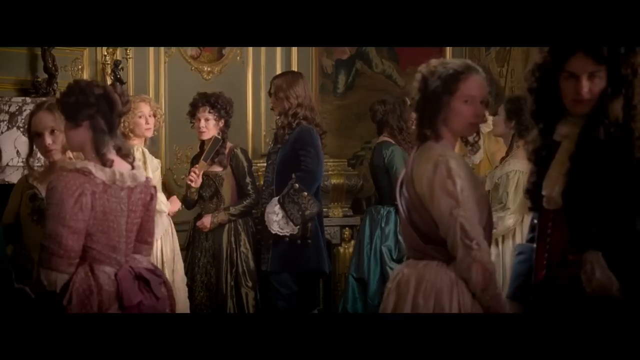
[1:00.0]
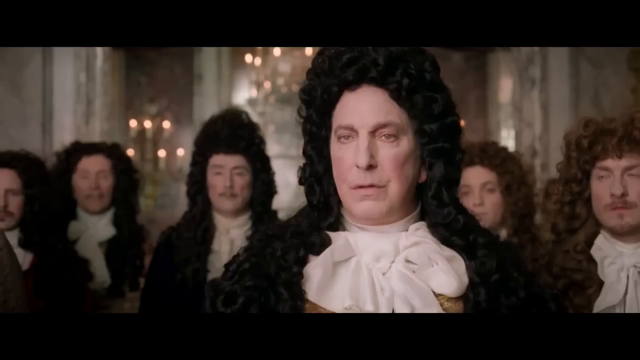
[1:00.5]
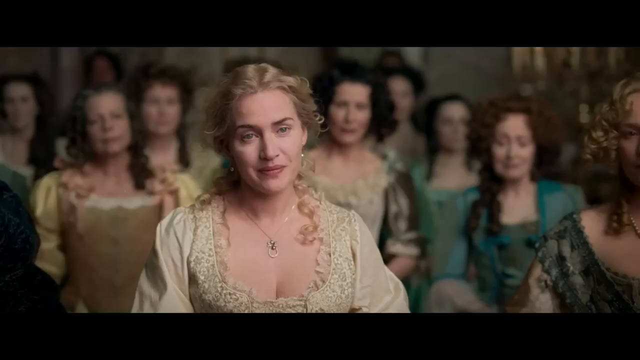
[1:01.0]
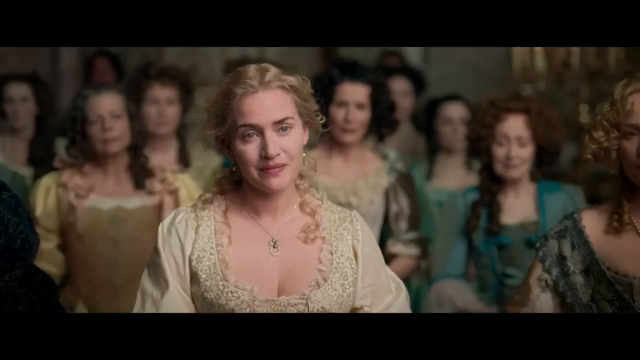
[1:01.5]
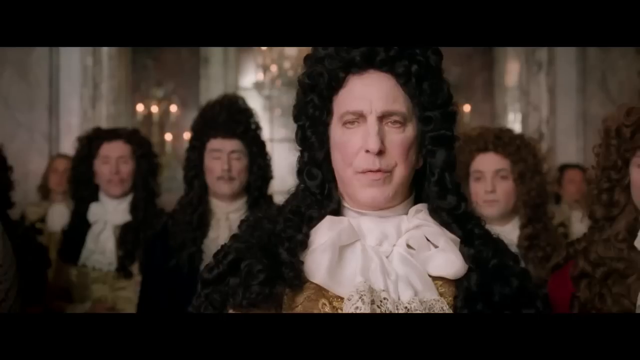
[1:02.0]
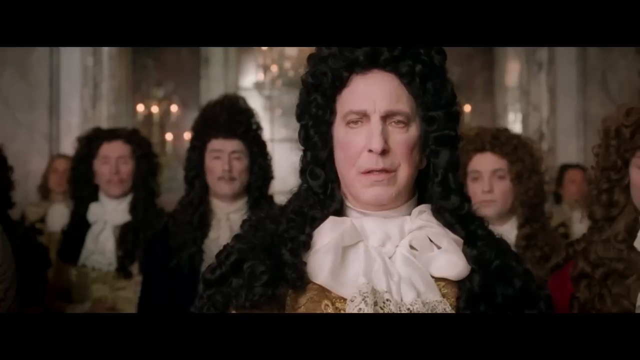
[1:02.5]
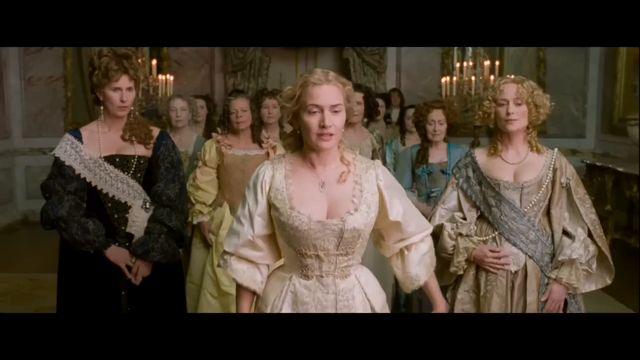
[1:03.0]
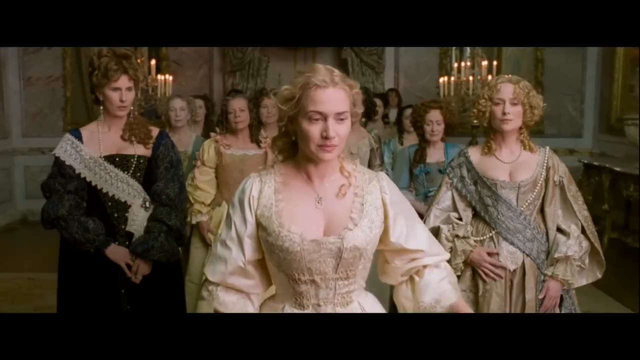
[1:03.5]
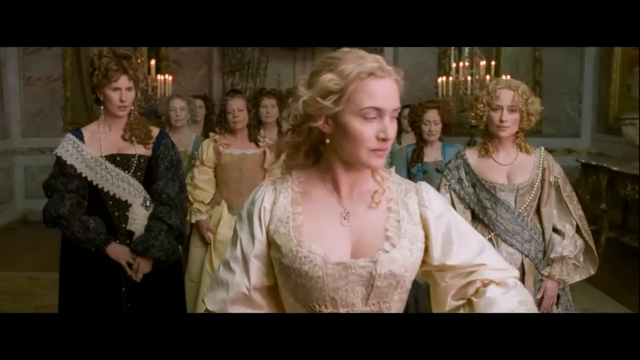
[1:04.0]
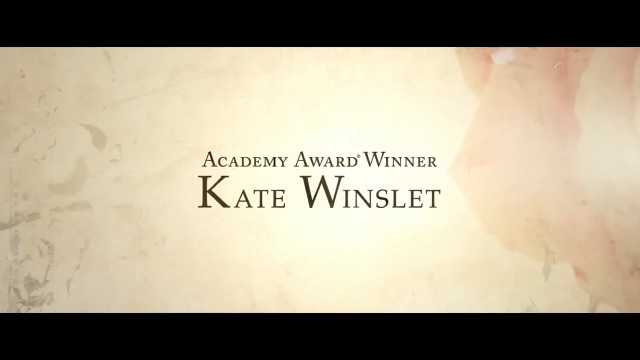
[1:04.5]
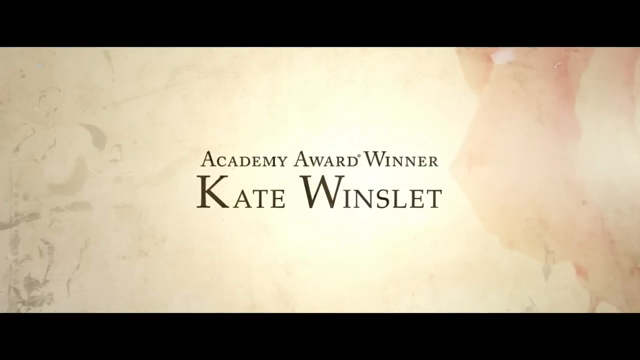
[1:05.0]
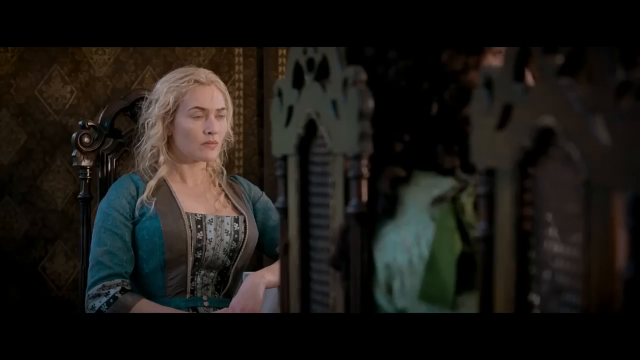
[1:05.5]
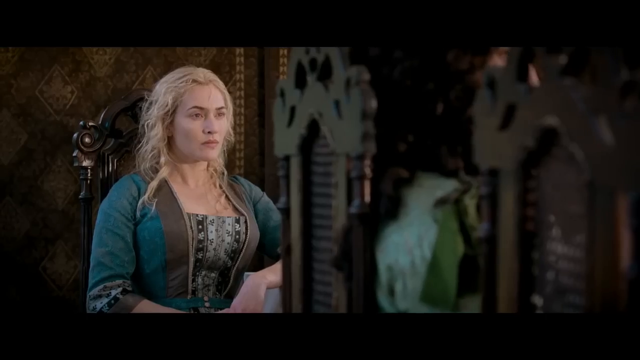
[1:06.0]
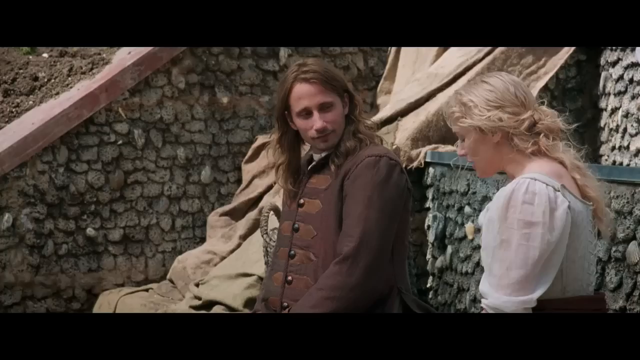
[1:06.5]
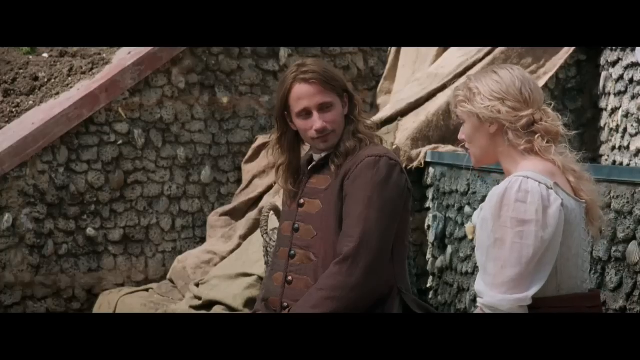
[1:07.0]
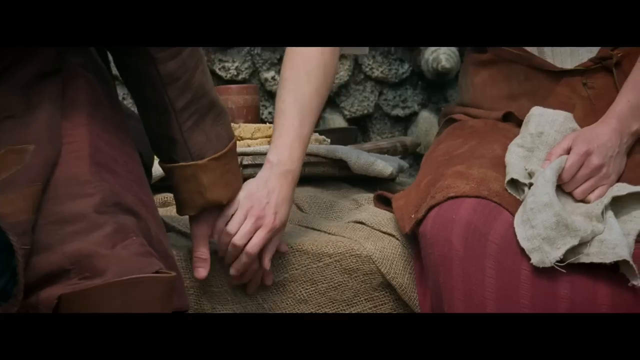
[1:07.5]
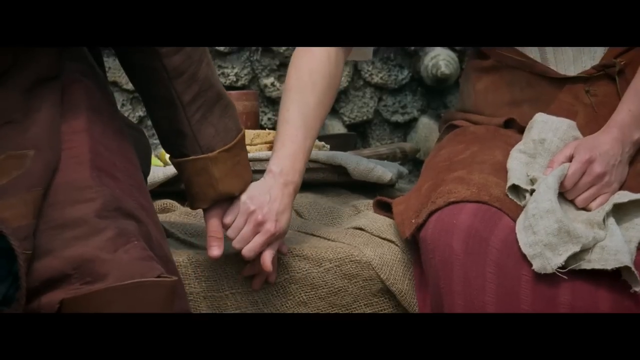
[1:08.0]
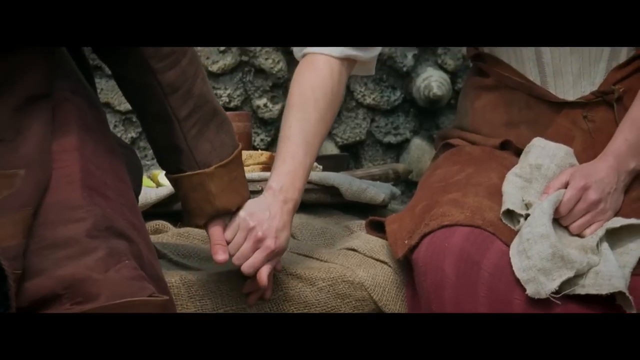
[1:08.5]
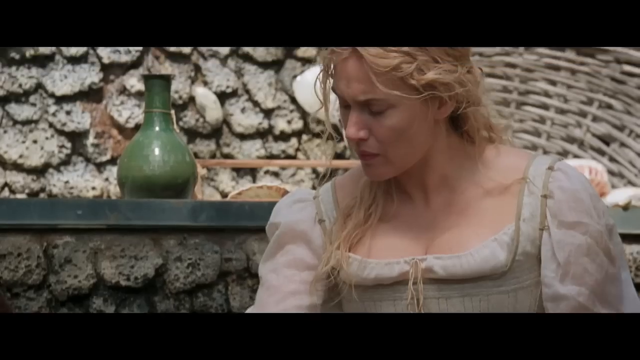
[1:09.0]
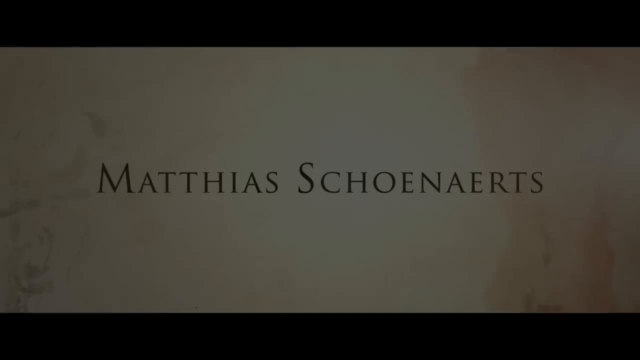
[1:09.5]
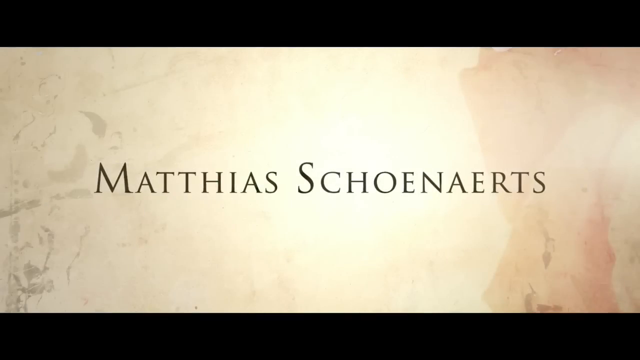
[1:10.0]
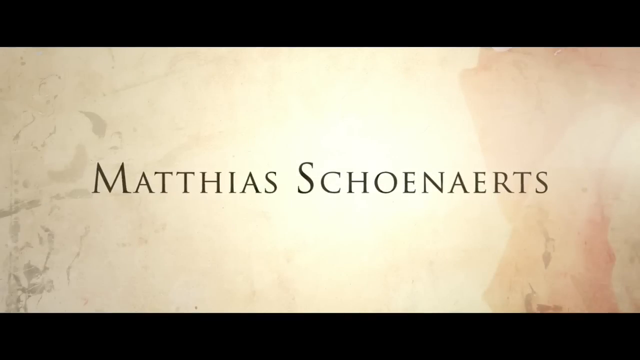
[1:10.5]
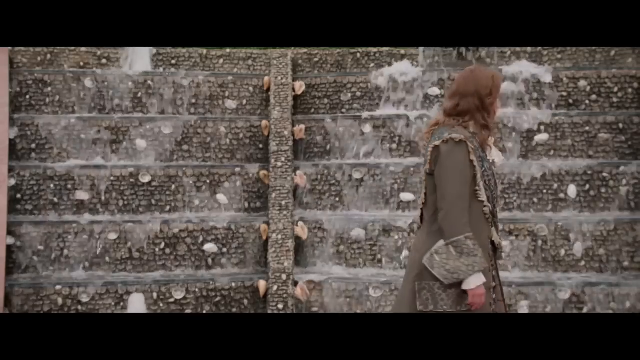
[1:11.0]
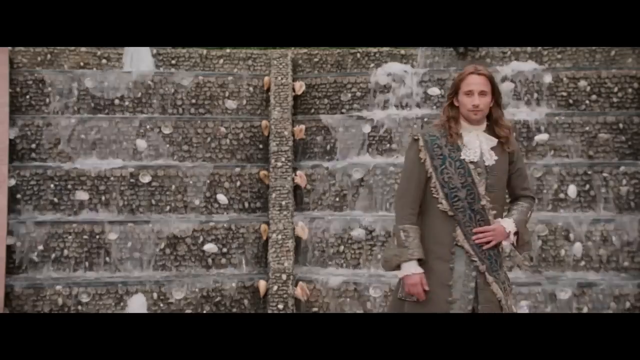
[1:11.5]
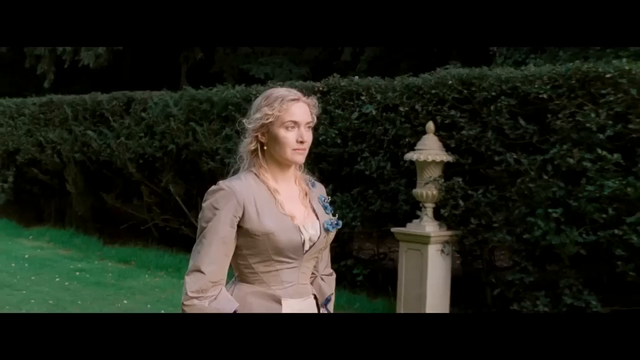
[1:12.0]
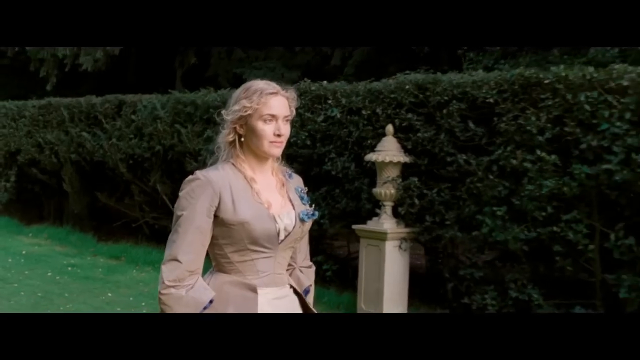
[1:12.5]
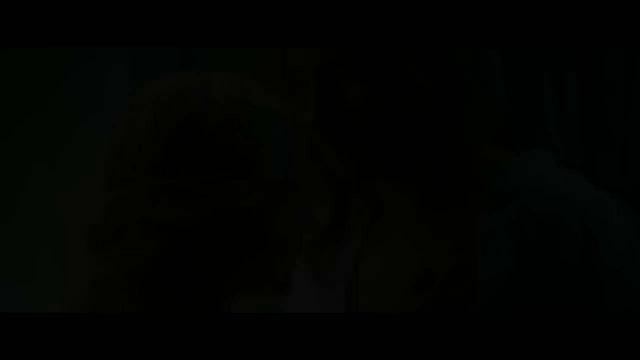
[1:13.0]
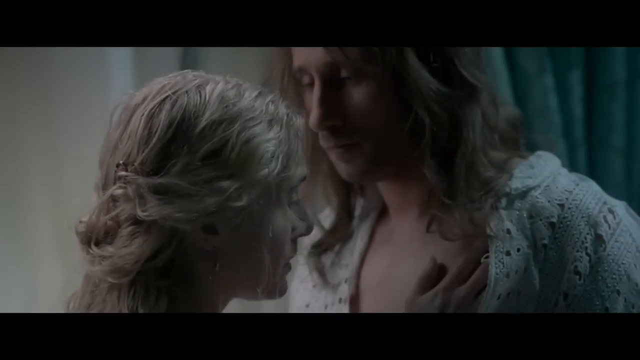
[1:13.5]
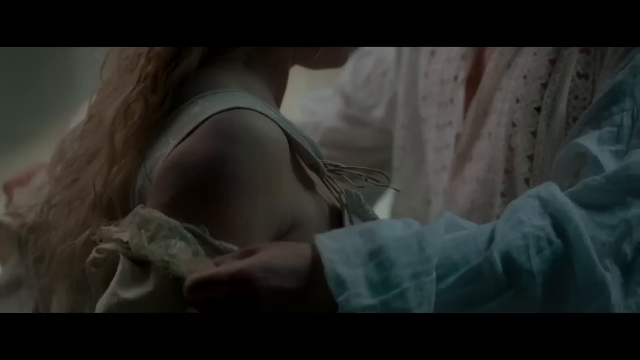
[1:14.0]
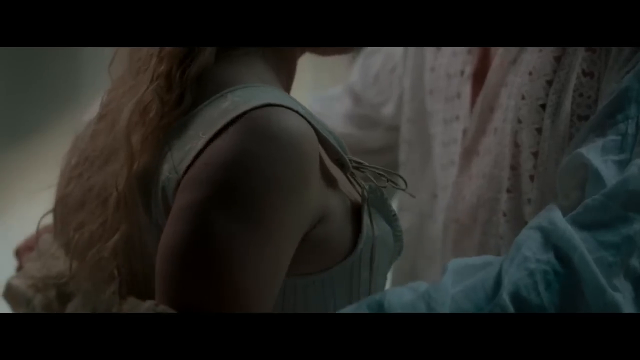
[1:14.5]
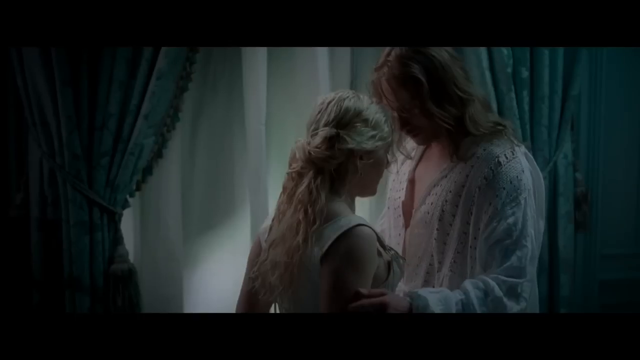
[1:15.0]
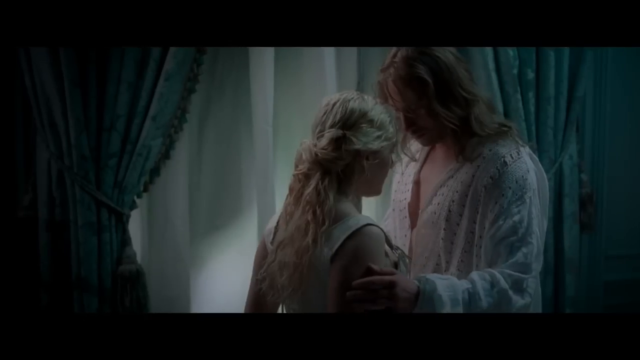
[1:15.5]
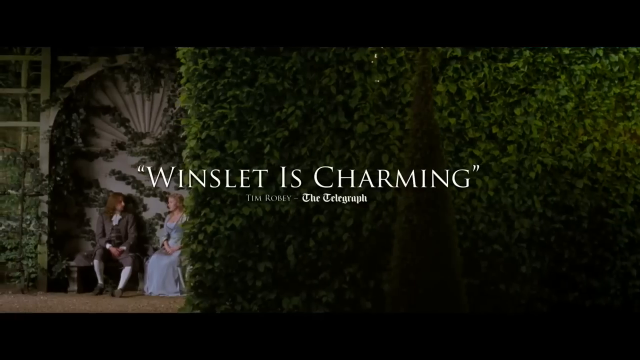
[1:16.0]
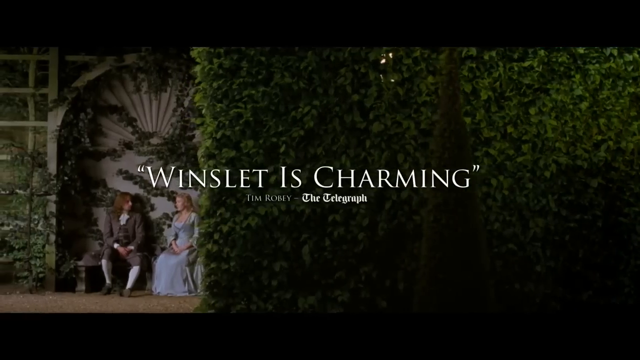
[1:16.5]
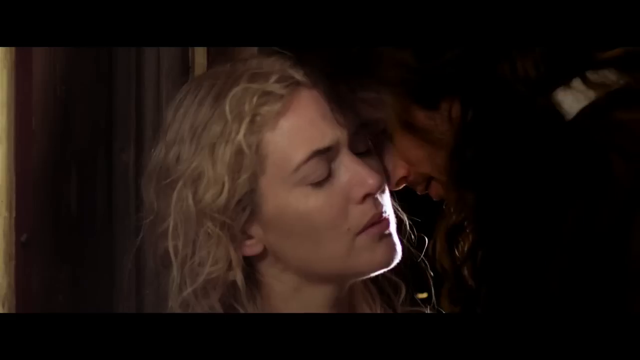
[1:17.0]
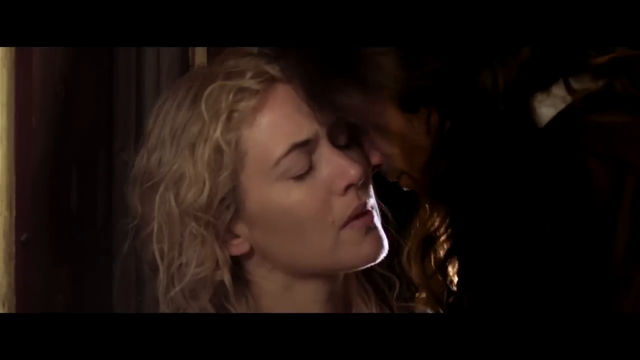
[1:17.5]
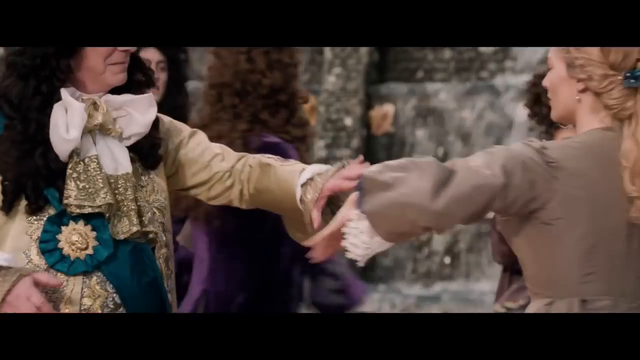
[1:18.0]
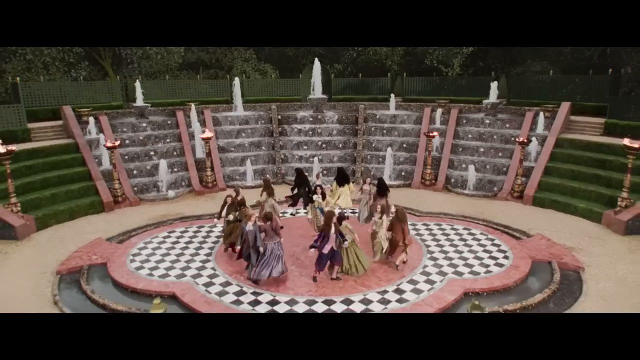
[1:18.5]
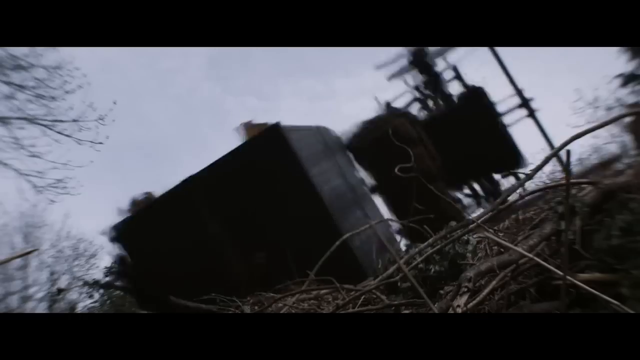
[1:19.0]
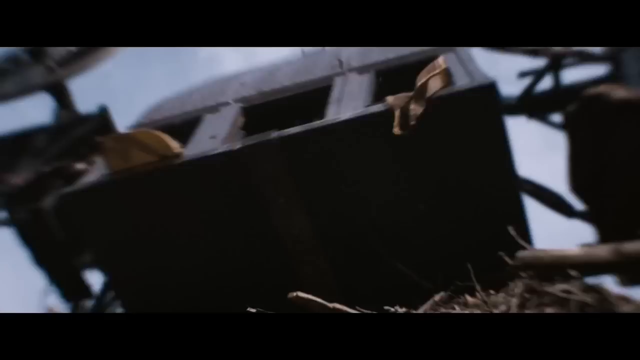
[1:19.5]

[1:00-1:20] A lady in a cream dress gives the king a peach rose; she is identified as Kate Winslet. She appears to be in love with a young man who looks like the king's son, named Matthias Schussnacht. The young man stands next to what looks like steps with water cascading down them. The young lady approaches him, and in an intimate moment he slowly takes off her garments. Text reads that Winslet is charming, attributed to Tim Robbie of the Telegraph. The two kiss.